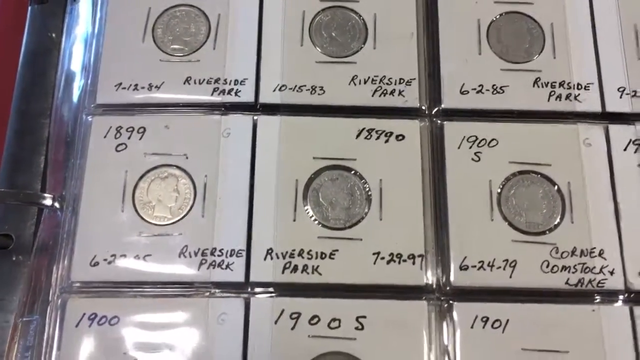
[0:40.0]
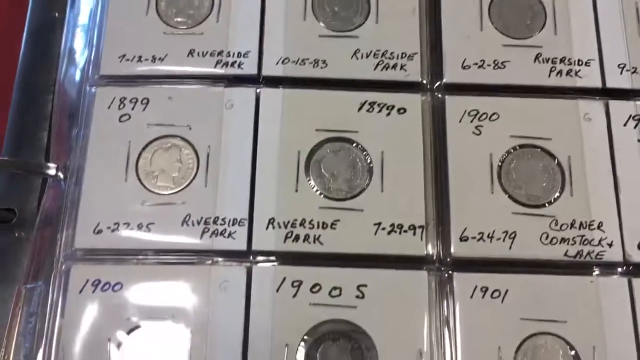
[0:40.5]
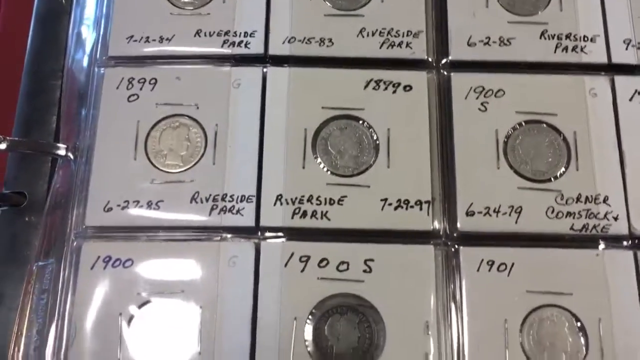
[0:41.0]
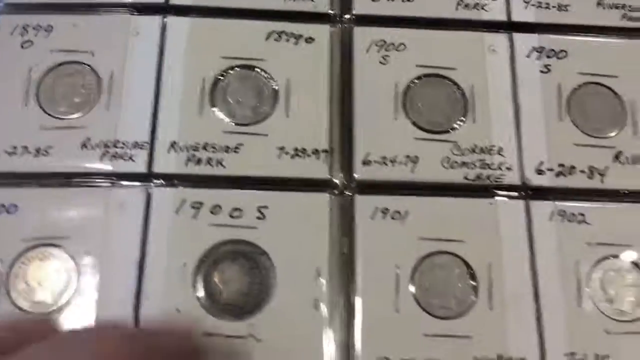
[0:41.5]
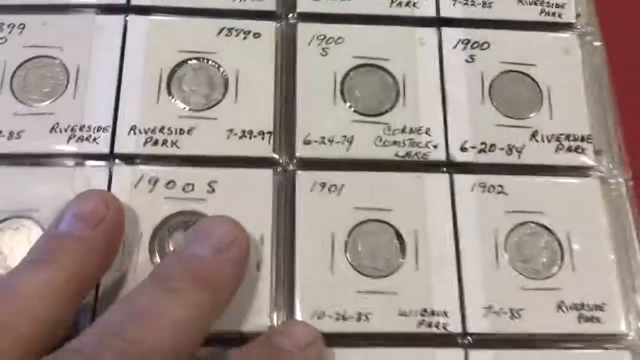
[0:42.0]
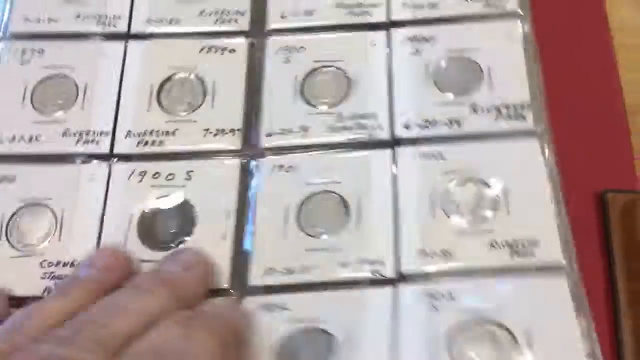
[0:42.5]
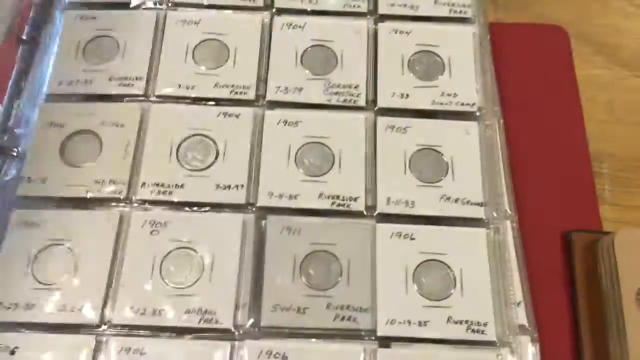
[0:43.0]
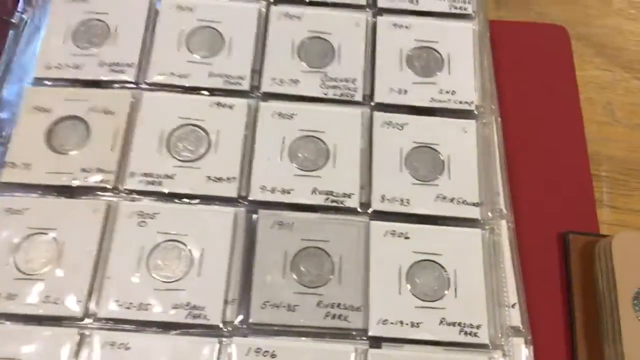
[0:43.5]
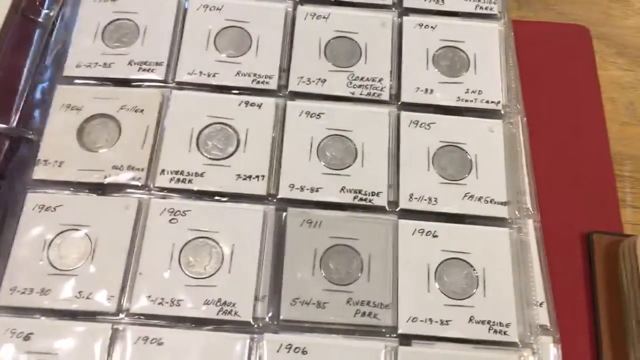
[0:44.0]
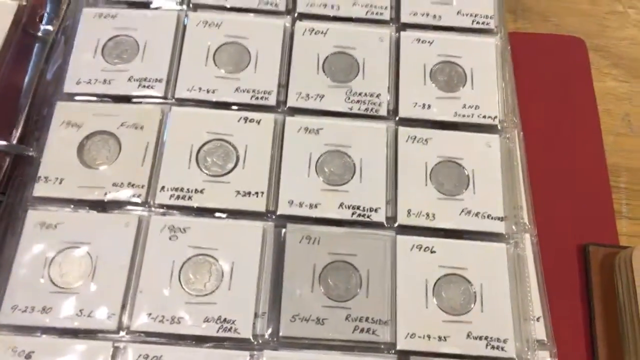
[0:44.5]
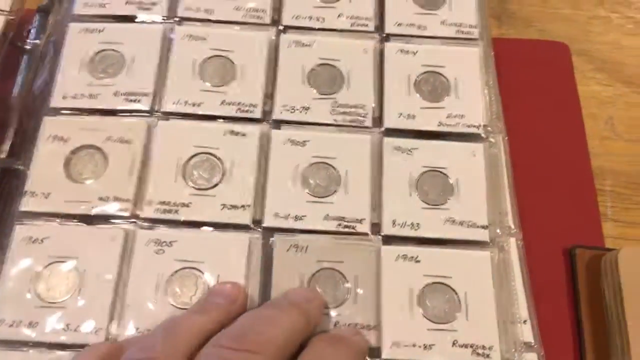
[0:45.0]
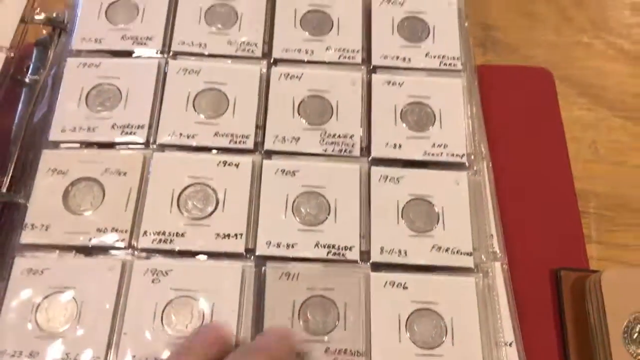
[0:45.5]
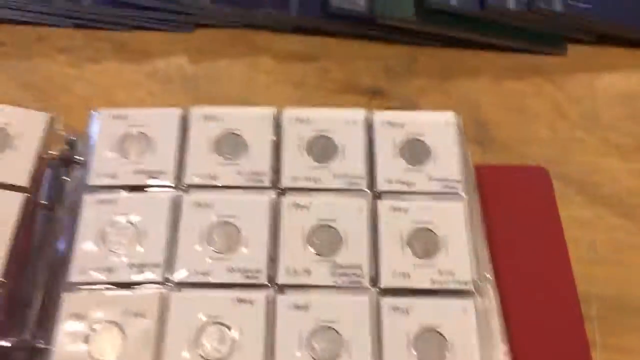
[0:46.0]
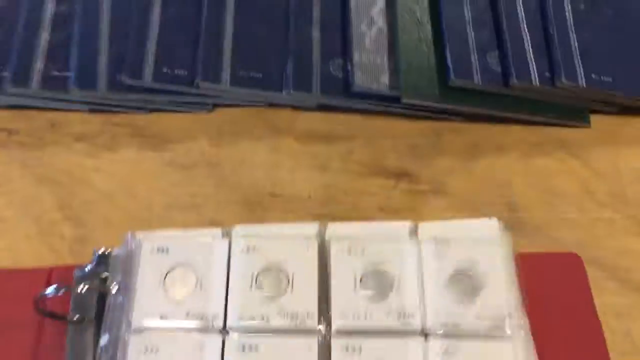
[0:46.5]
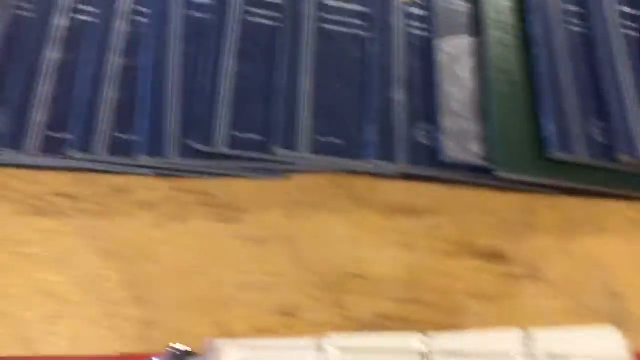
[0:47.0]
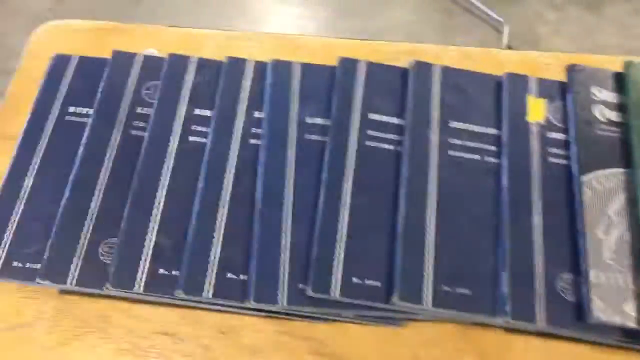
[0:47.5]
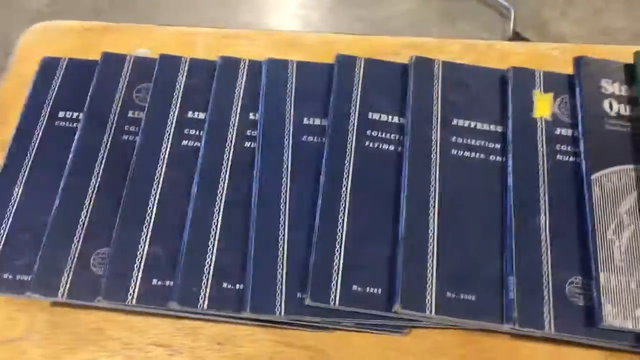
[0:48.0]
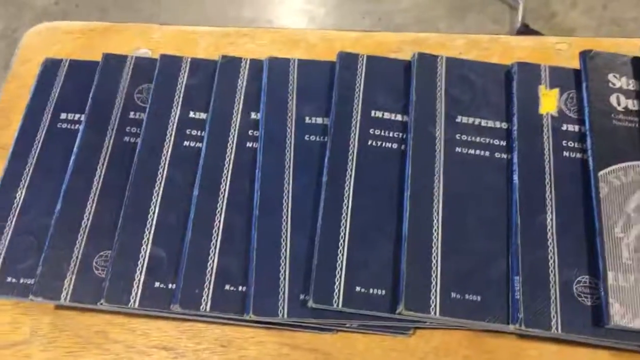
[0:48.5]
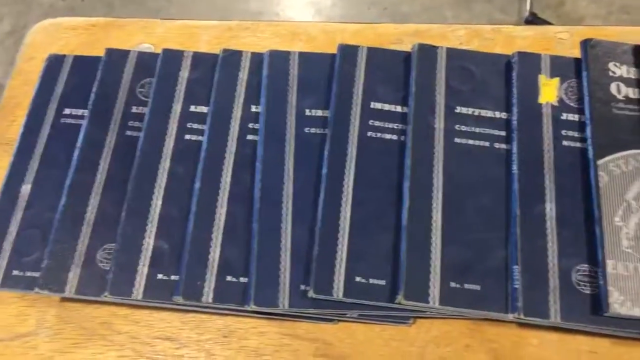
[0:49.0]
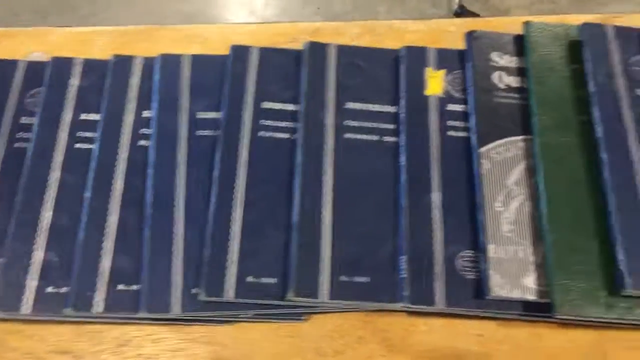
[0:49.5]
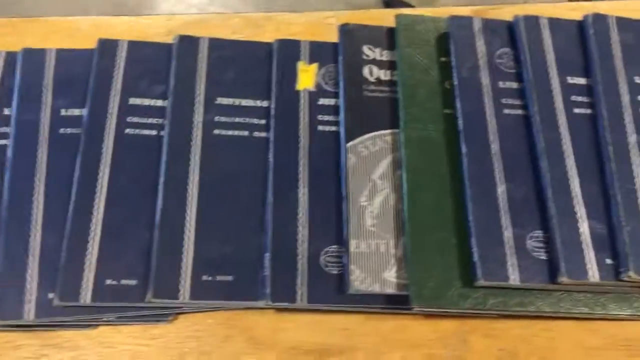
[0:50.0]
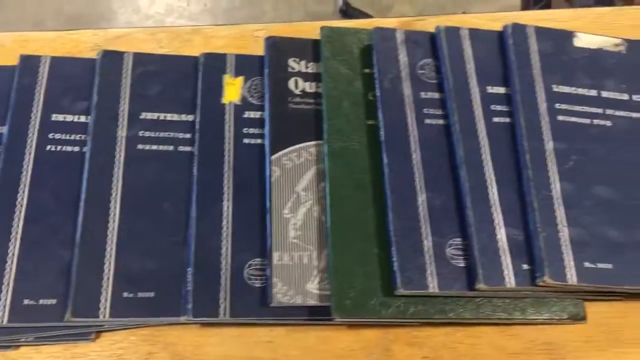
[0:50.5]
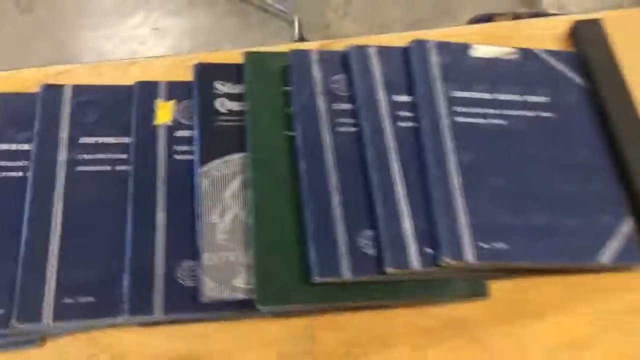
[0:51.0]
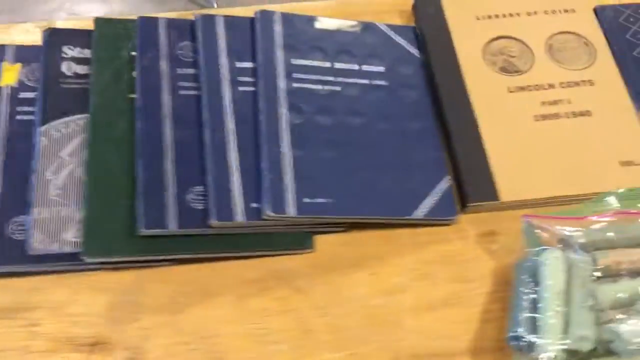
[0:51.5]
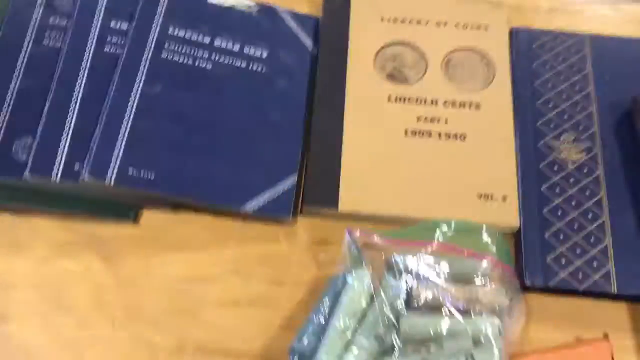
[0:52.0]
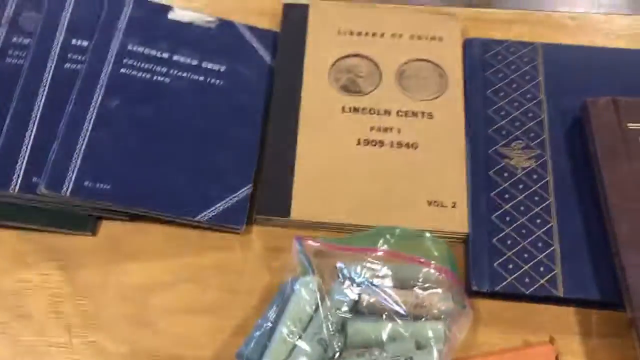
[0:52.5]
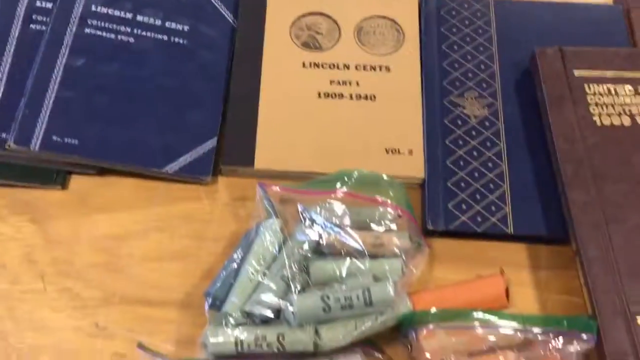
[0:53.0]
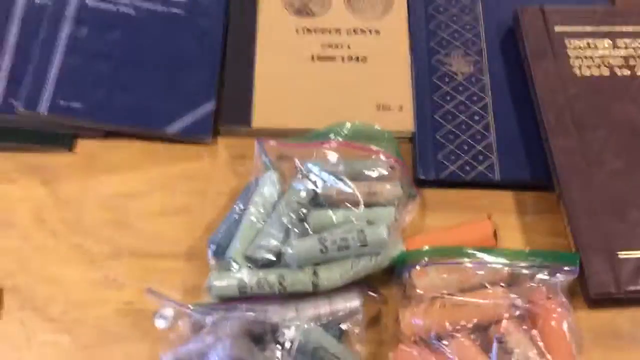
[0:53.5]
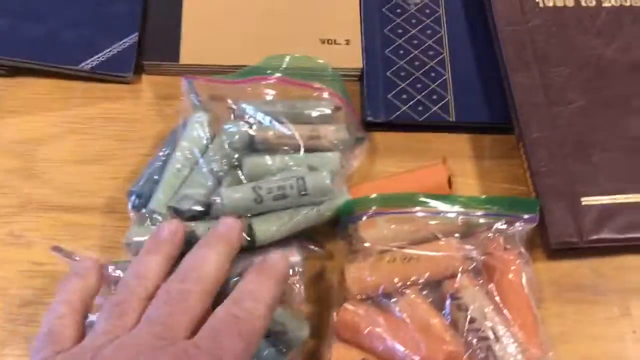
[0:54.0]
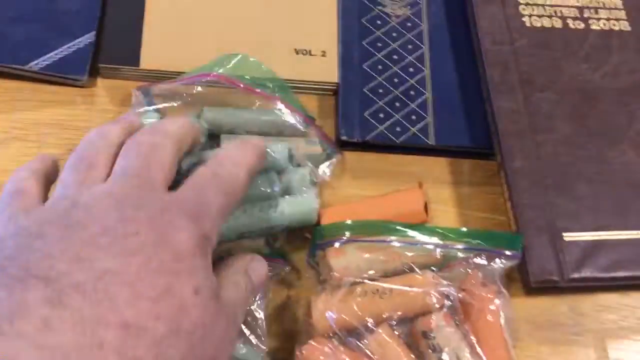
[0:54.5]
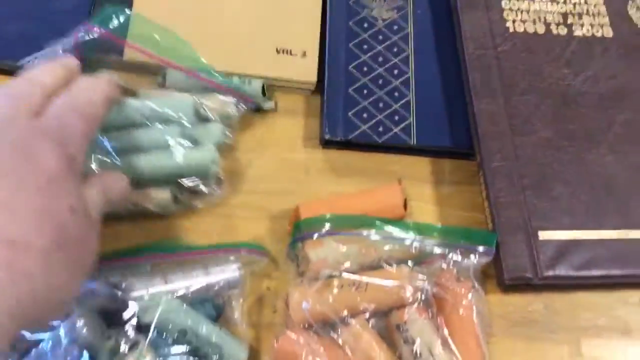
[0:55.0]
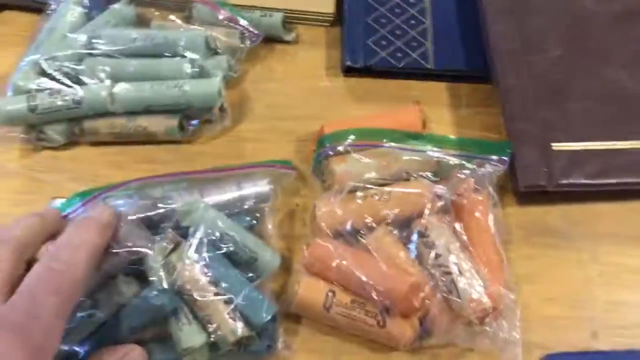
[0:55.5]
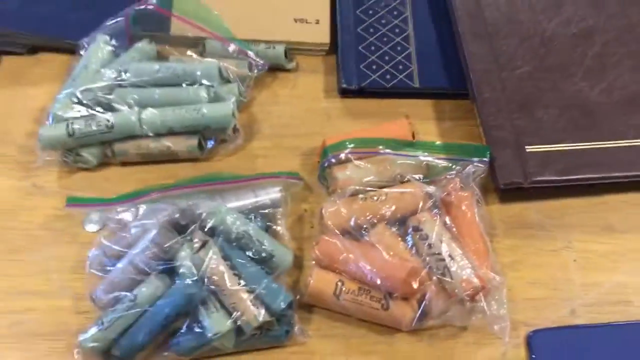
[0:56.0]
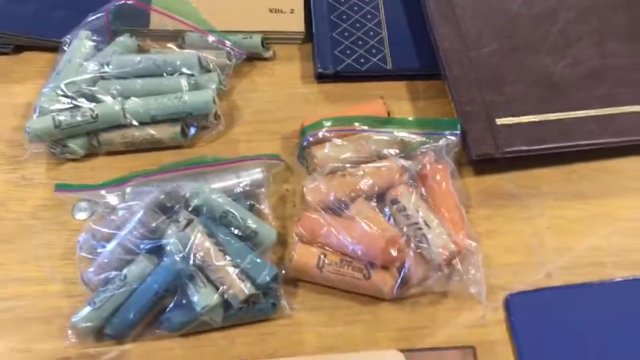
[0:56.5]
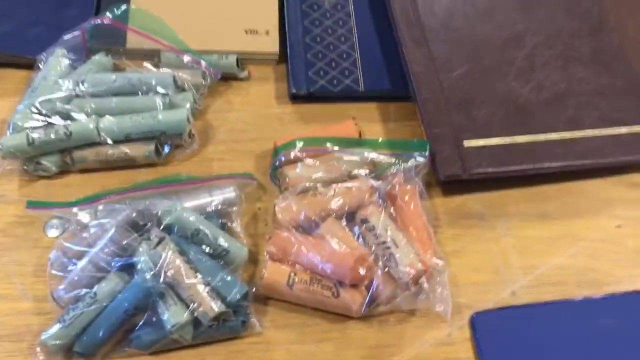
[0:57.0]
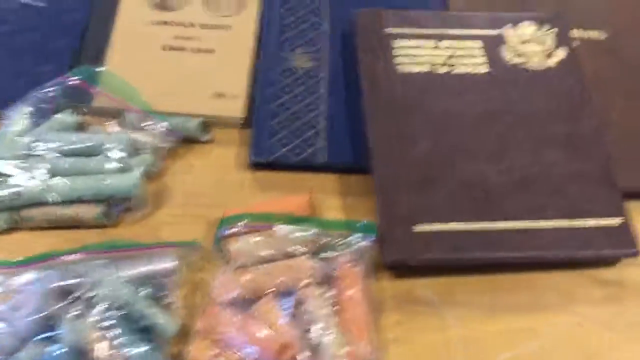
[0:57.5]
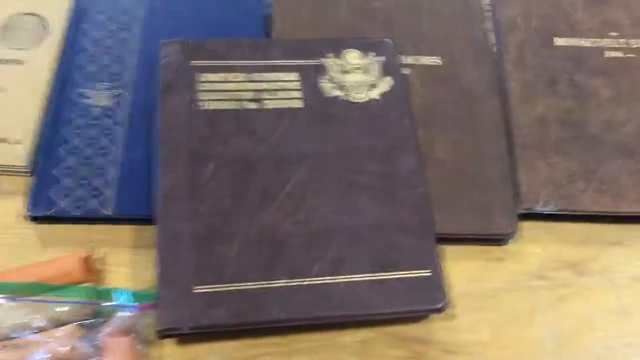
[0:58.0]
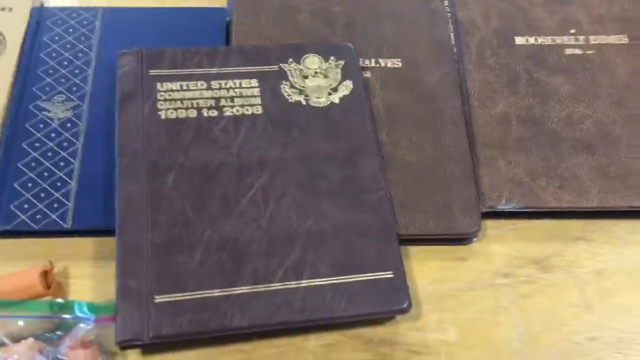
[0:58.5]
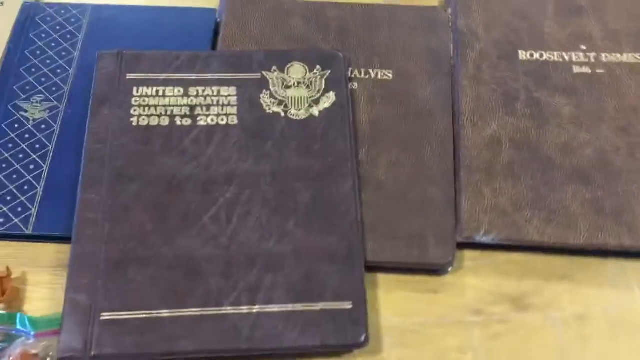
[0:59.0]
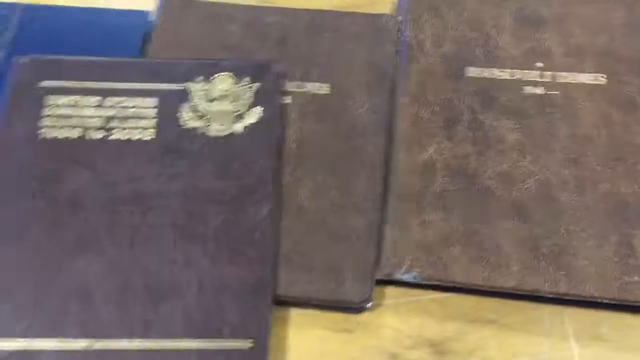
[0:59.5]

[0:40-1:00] A maroon file holds what look like coins, though they also seem like they could be silver eyeshadow. They look like coins because a head is visible on them, along with words and numbers that cannot be read properly. Visible words include "riverside park", with different numbers and dates; 1890 can be seen, and the shape of 1899. The numbers seem all the same, but the dates differ. The coins are silver and are set in small papers separated into squares. There are files or books holding many of these coins, with a design like a flag or money on top. Items that seem to be lipstick are in see-through bags of different colors, so their contents can be seen.